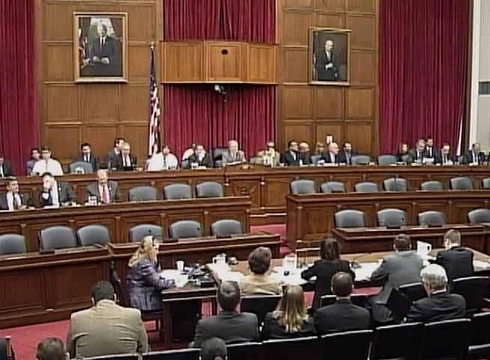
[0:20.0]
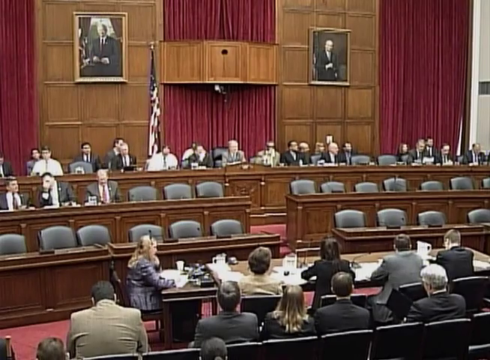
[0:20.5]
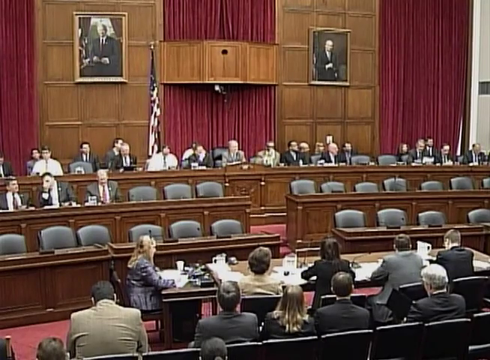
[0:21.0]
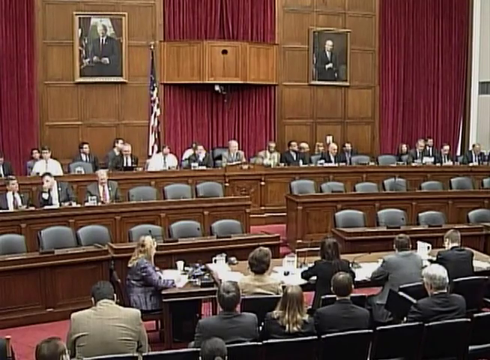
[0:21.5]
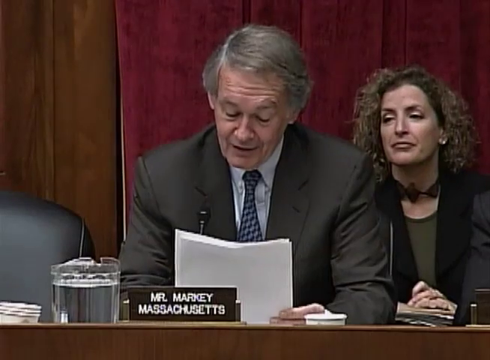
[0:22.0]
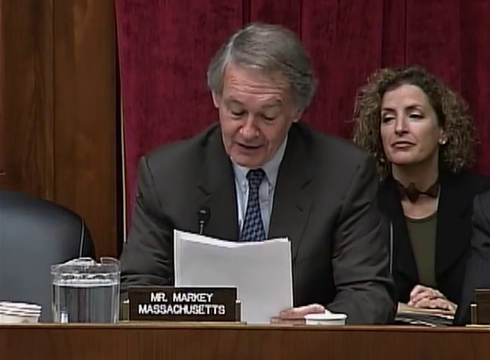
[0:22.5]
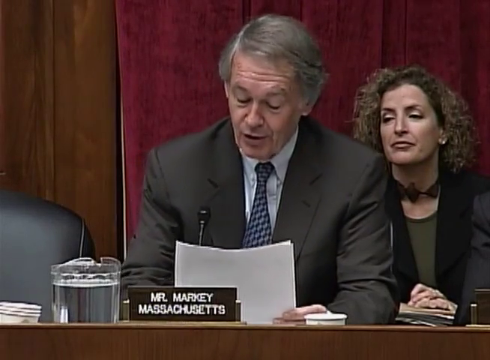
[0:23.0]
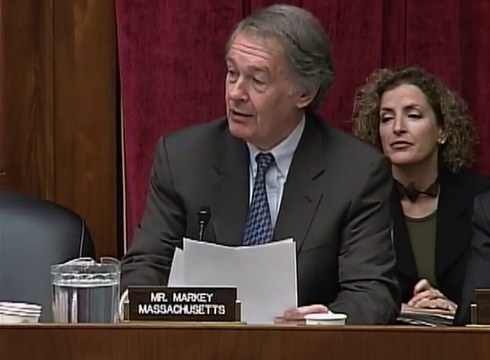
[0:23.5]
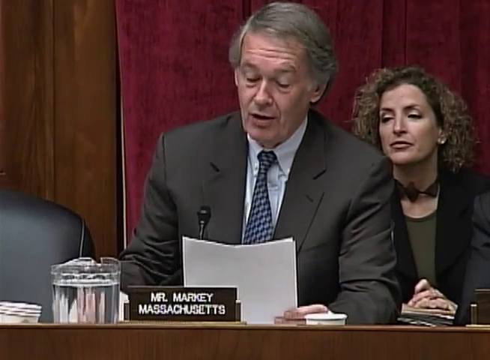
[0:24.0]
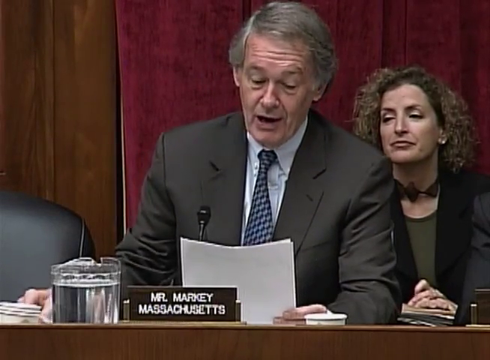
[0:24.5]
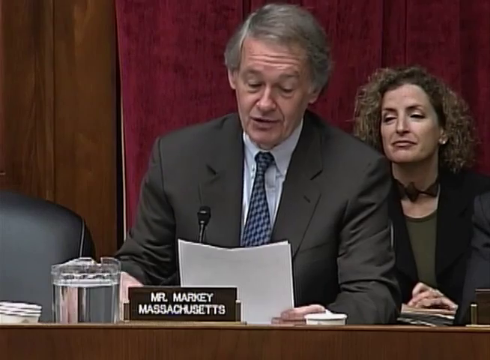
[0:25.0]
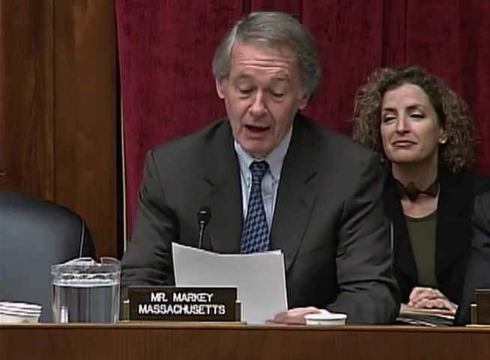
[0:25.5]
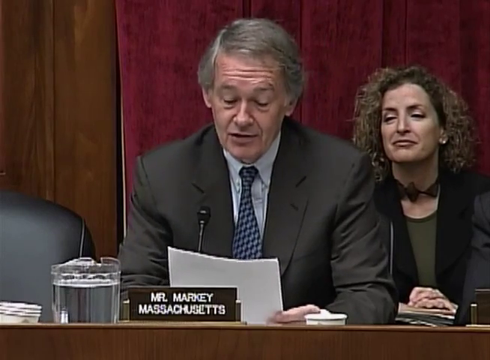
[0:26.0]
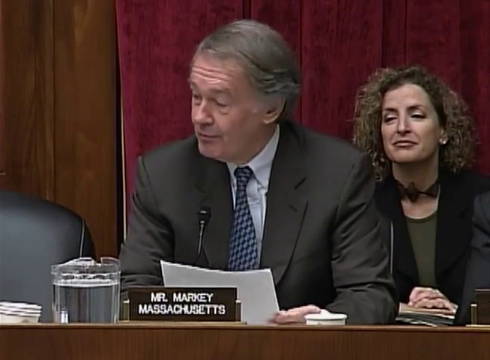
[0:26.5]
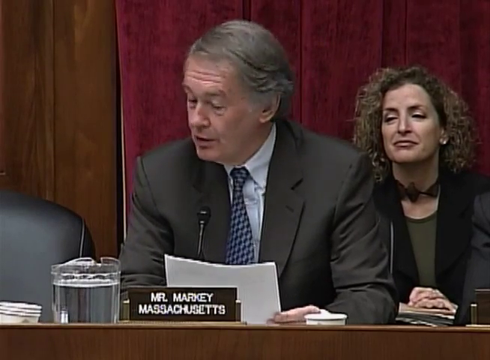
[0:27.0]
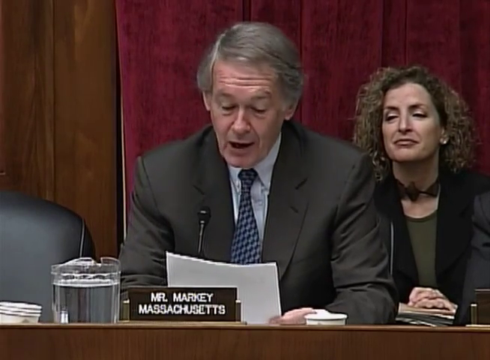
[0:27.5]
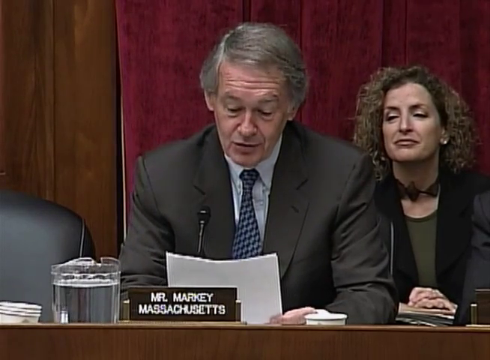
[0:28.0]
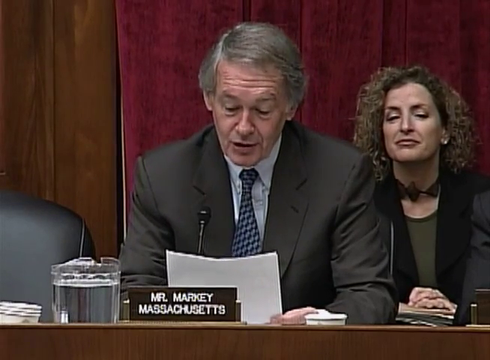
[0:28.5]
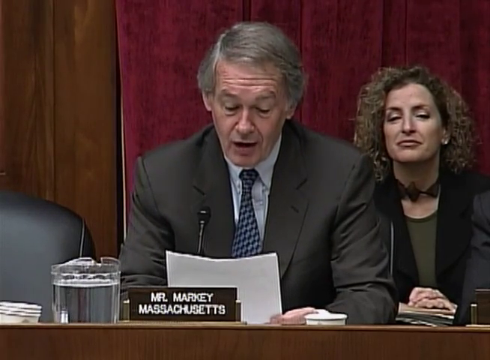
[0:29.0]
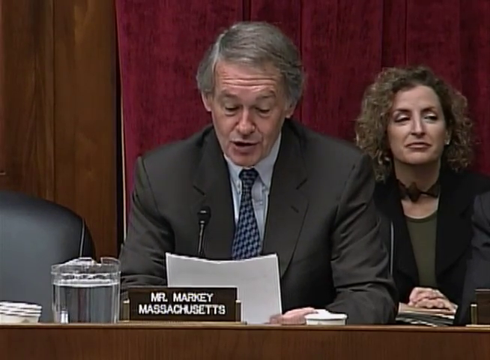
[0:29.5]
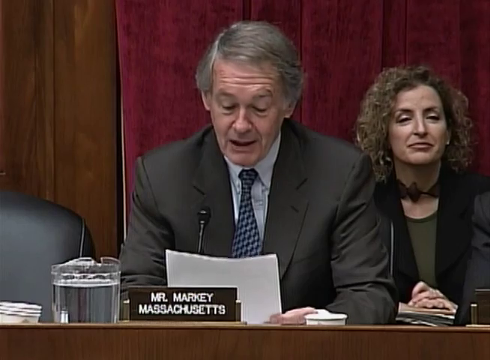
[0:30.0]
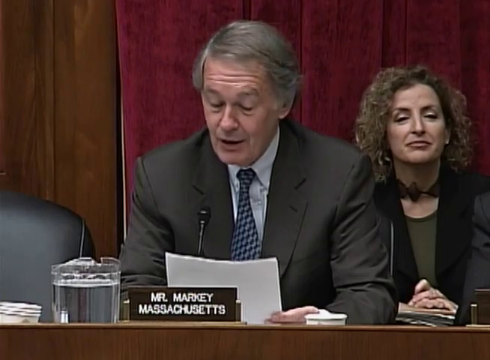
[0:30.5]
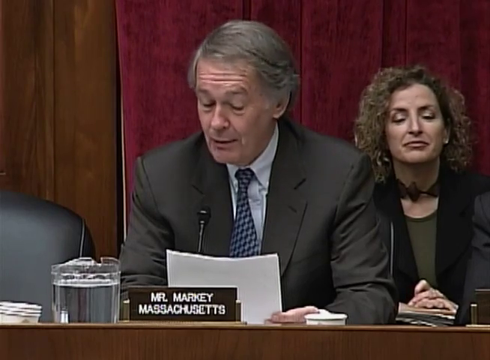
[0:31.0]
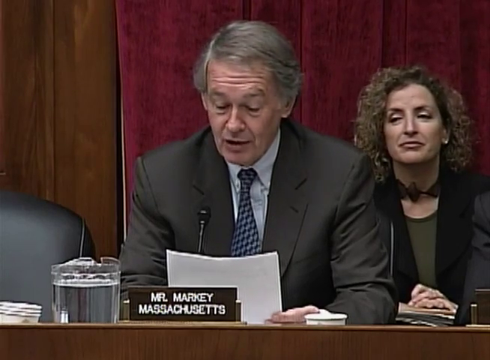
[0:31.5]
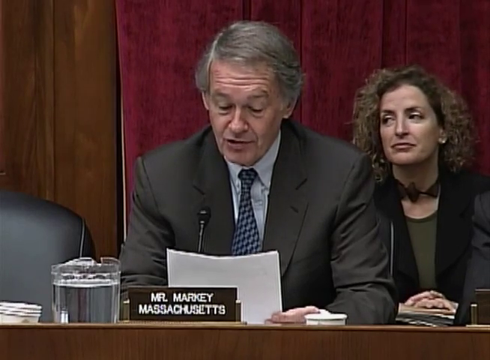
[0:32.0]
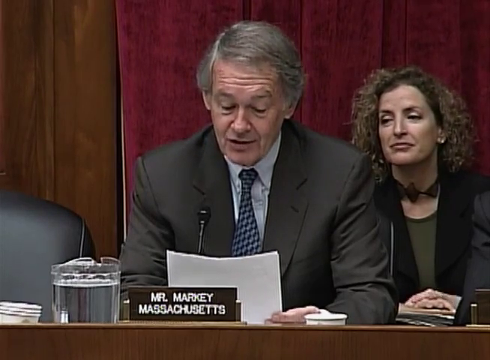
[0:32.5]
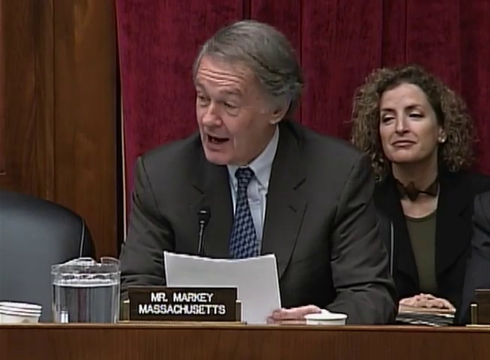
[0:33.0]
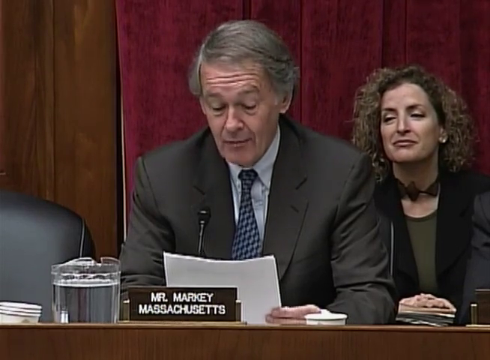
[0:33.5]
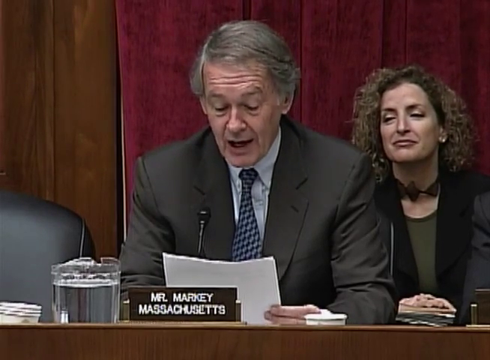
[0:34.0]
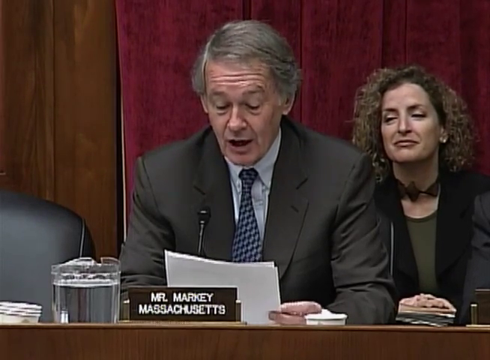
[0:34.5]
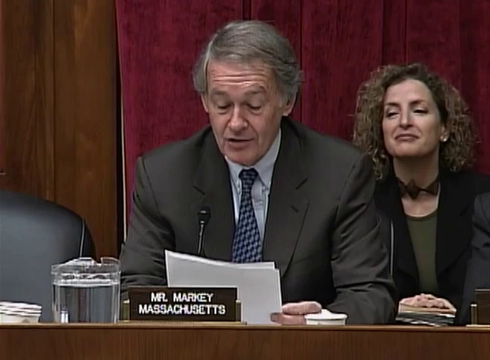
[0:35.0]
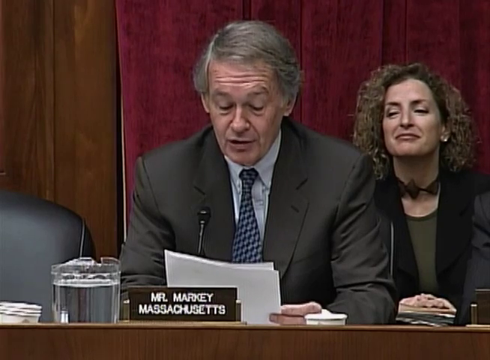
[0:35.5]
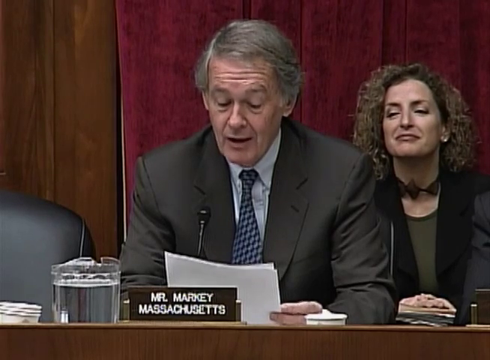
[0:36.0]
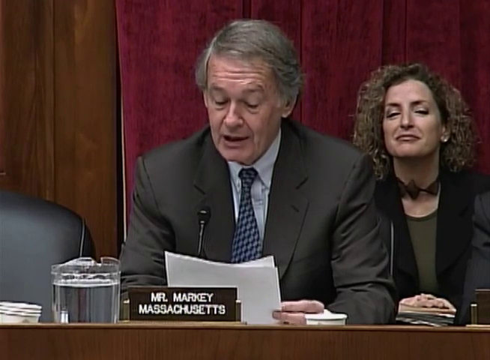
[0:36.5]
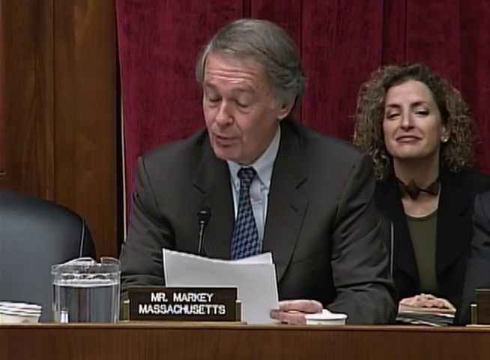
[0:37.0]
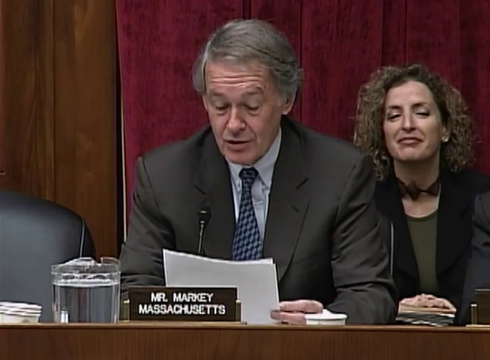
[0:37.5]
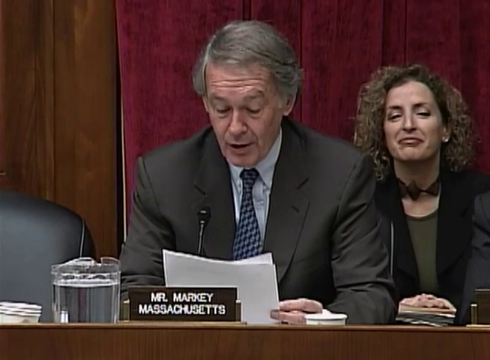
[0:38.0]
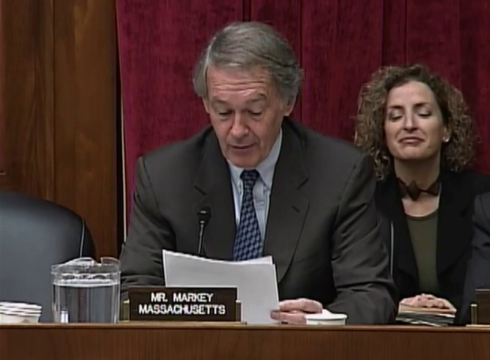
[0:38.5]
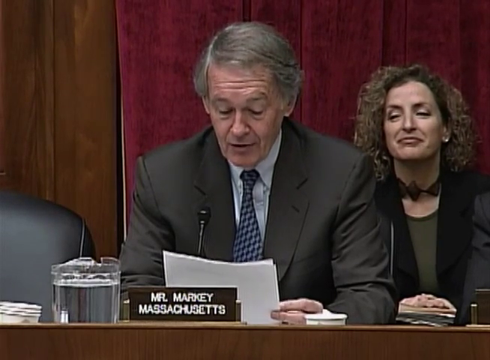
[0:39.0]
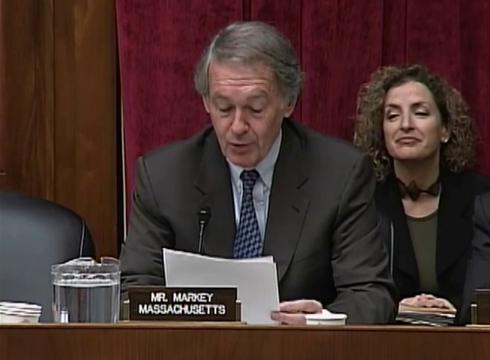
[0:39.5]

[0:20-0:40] The room has 40 seats. There is an image or an actual flag of the United States in the room. Two men sit in the gray seats in the middle of the room, and on either side of these seats is a long desk filled with men and women. The camera zooms in on a white male gentleman who is talking. A nameplate in front of him reads "Mr. Parkinby, Massachusetts." There is a microphone in front of him, and there is a seat next to it. Behind him, a young woman in a green suit seems to be talking. Mr. Parkinby looks toward a gentleman, goes through his papers, possibly talking about what is on them, and glances up and to the side multiple times, while the woman behind him continues to make faces.